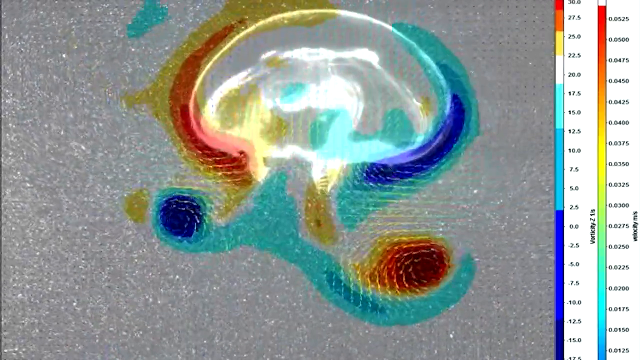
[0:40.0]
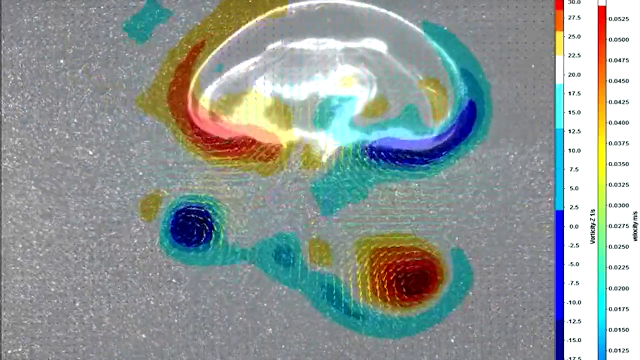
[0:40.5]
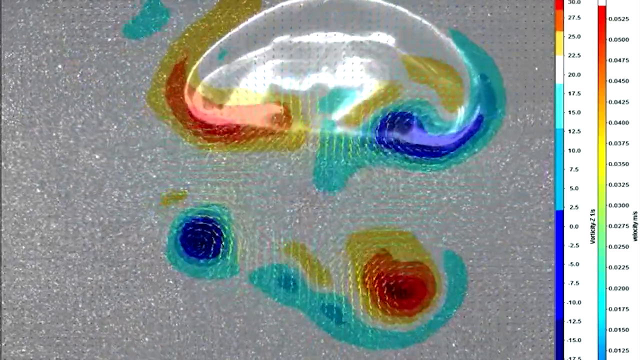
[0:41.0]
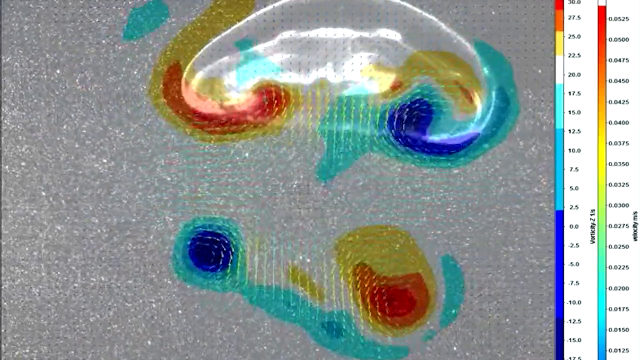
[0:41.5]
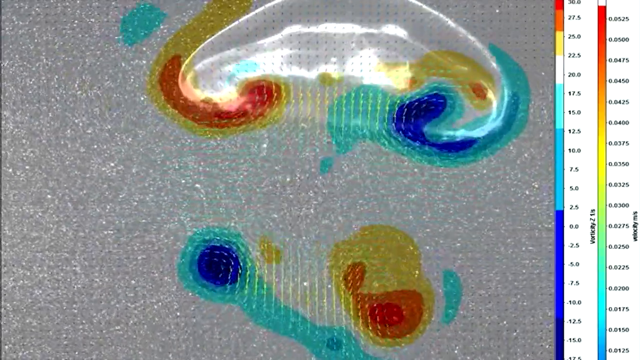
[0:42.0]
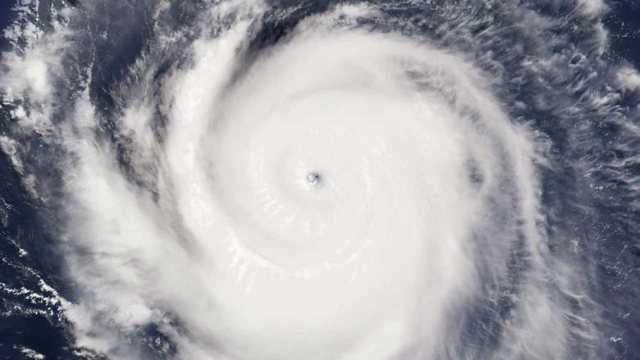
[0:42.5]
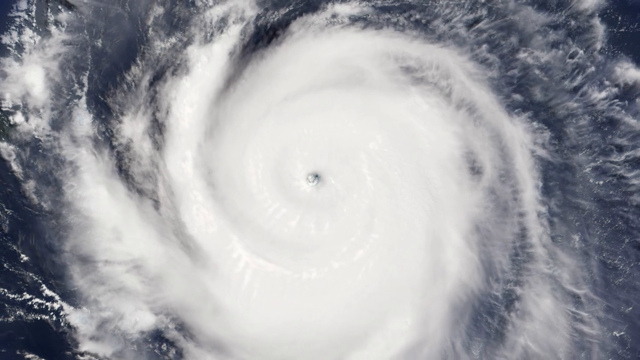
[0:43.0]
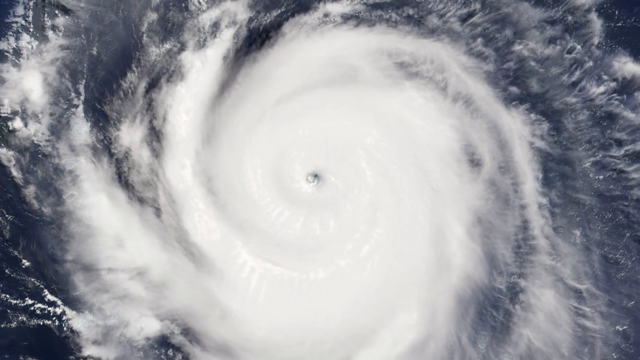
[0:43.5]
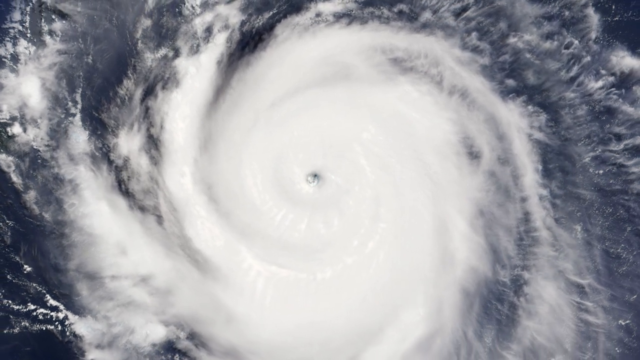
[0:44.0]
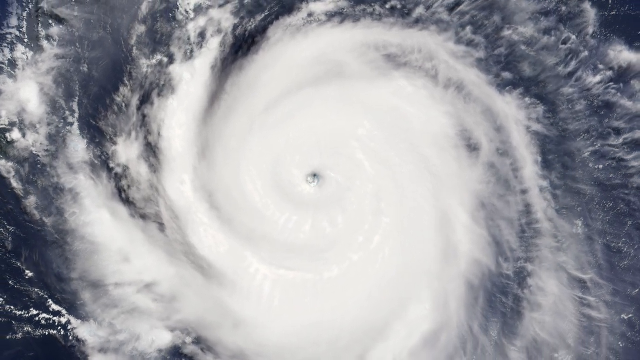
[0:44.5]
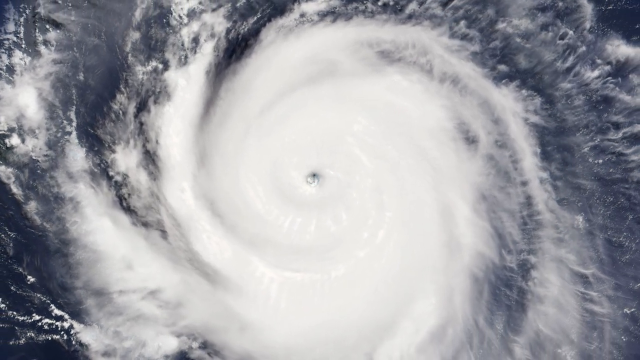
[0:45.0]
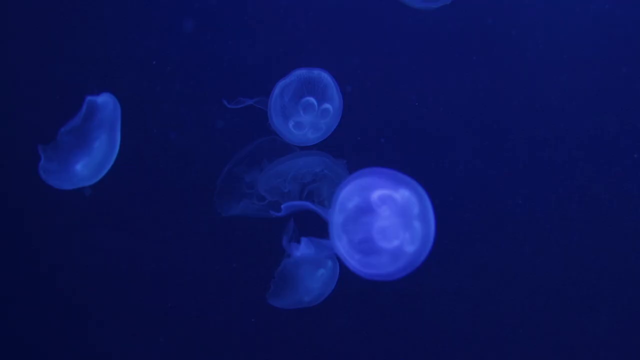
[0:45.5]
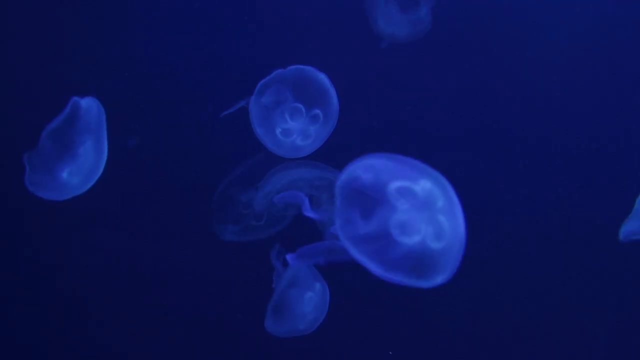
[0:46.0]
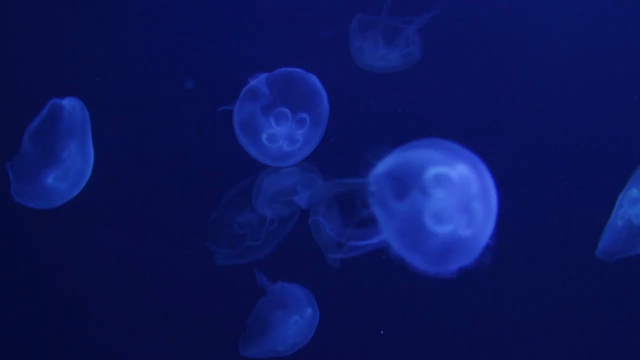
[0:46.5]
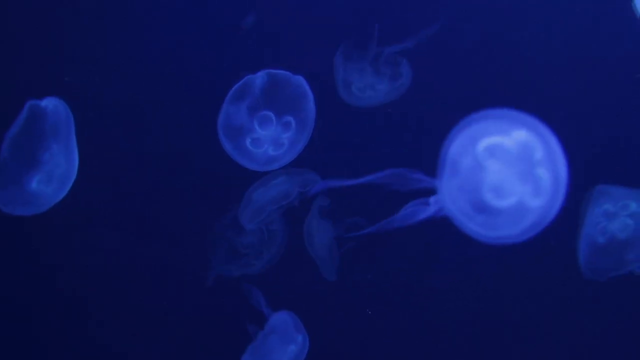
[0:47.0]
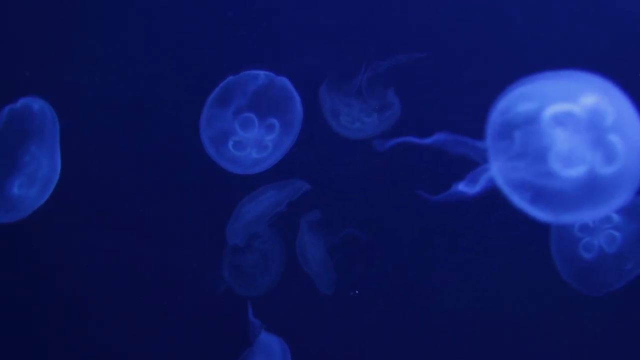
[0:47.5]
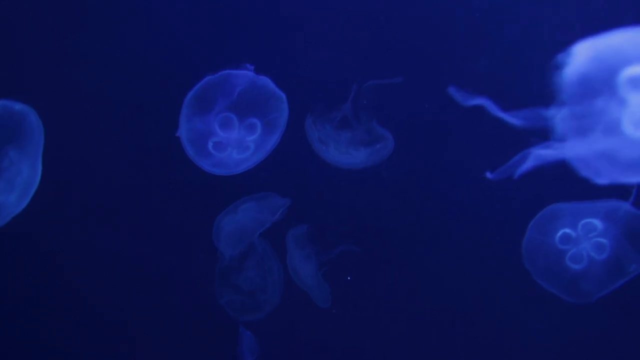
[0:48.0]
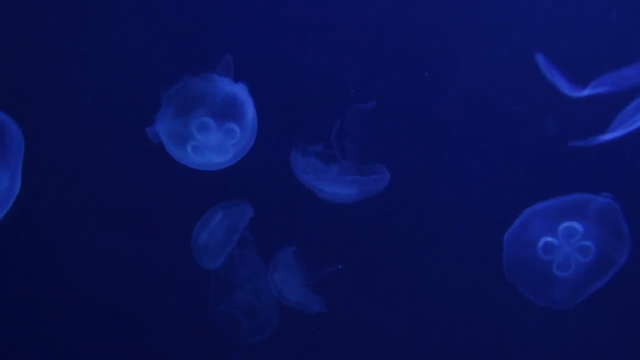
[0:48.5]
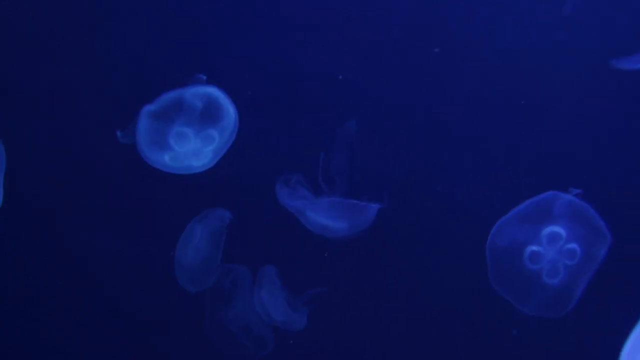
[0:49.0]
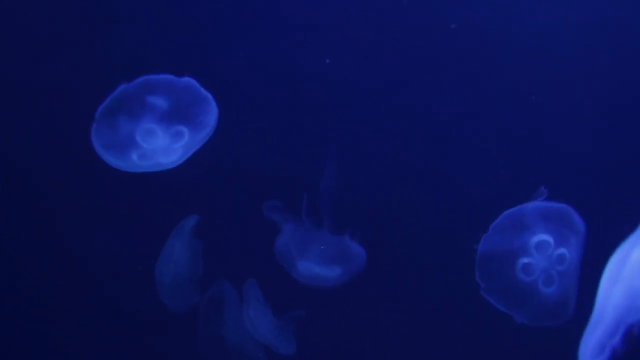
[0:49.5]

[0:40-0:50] What appears to be a satellite view of a hurricane forming over an ocean is shown rotating for a moment or two. Then a few jellyfish, approximately six, are shown again, glowing vibrant blue against the deep ocean. They swim forward, undulating as they propel themselves. The tops of their domes have a pattern that looks like a four-leaf clover, and they appear to have two to three tentacles each. The footage of the jellyfish swimming continues for a few more seconds, their luminosity in stark contrast to the darkness of the sea around them.